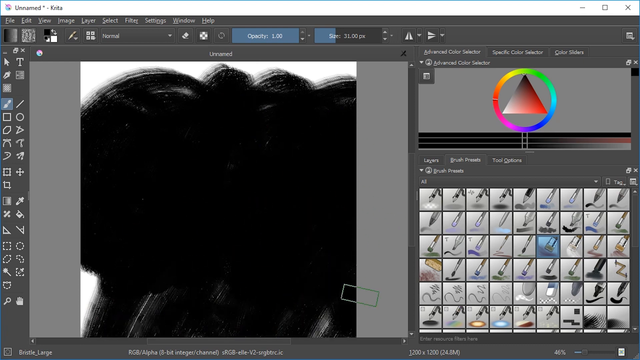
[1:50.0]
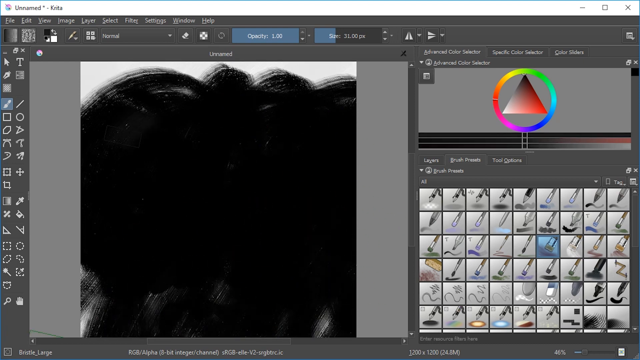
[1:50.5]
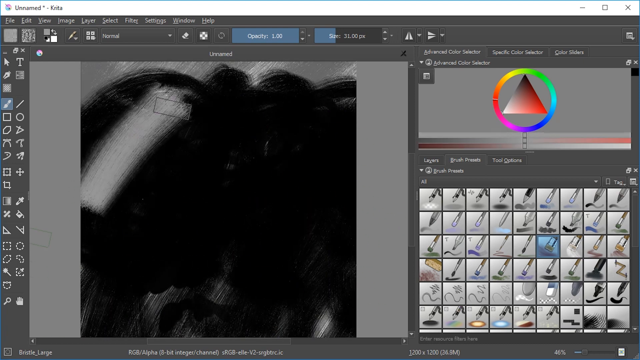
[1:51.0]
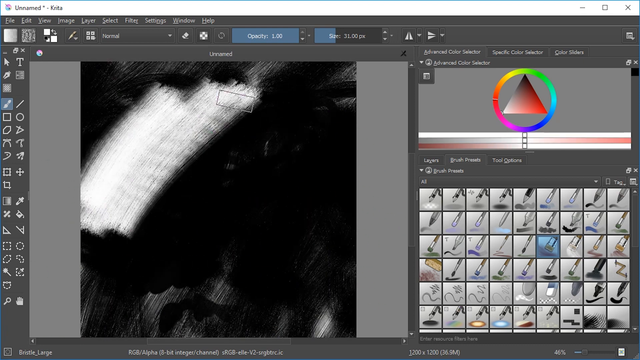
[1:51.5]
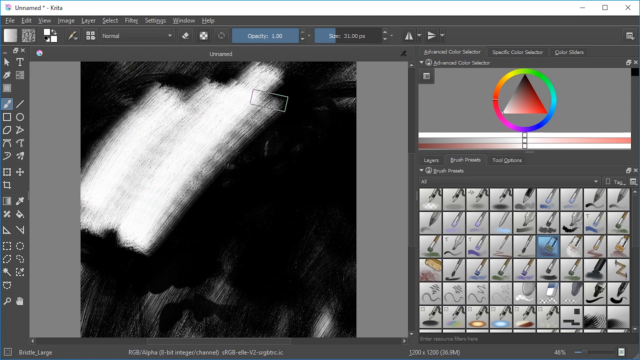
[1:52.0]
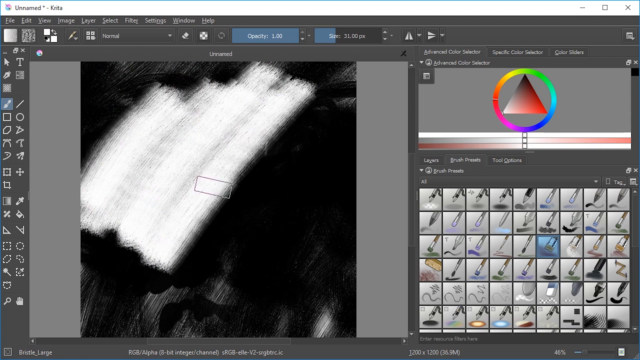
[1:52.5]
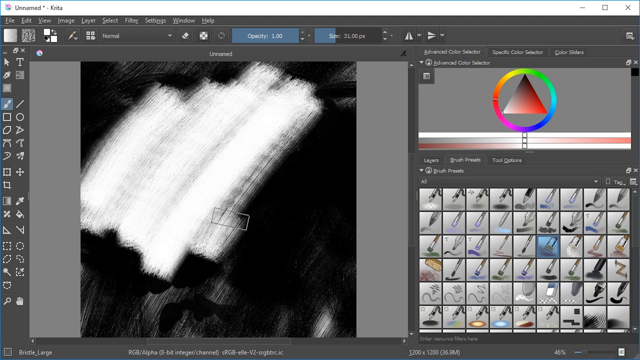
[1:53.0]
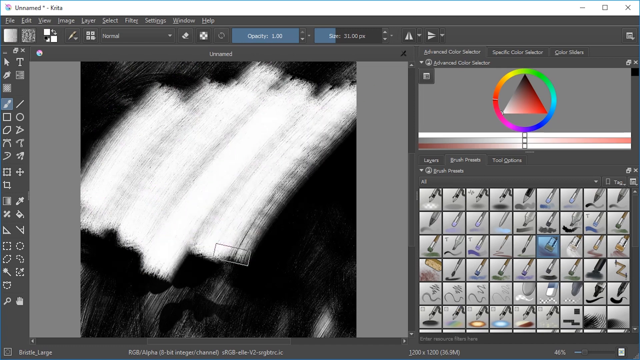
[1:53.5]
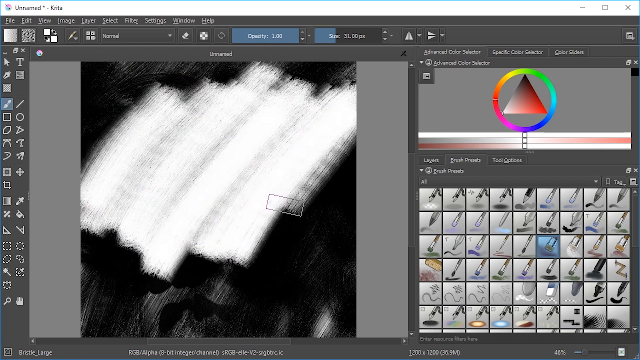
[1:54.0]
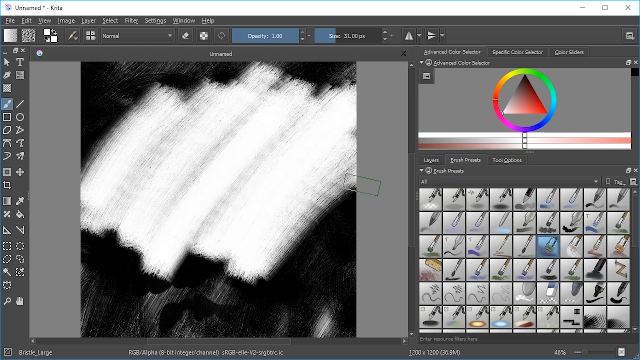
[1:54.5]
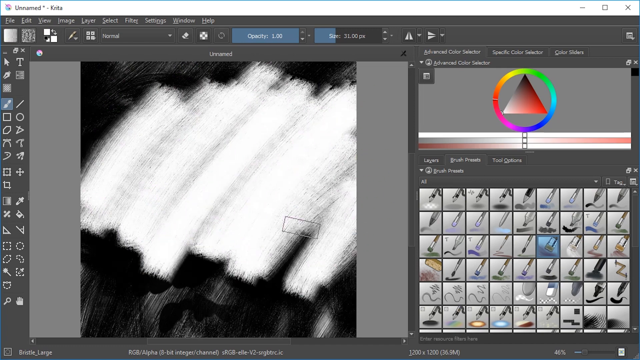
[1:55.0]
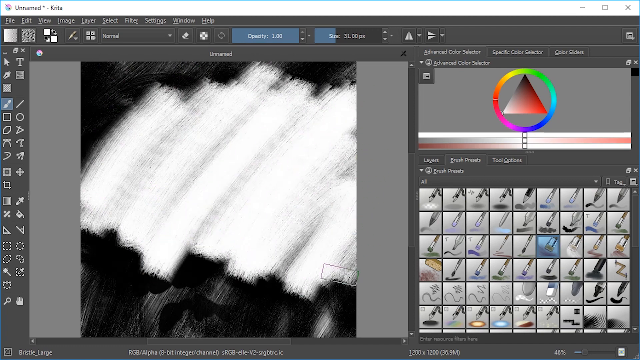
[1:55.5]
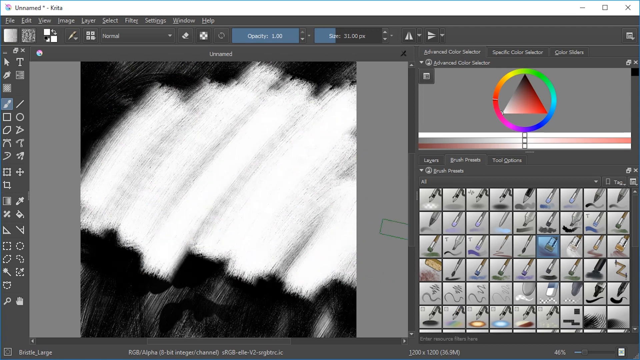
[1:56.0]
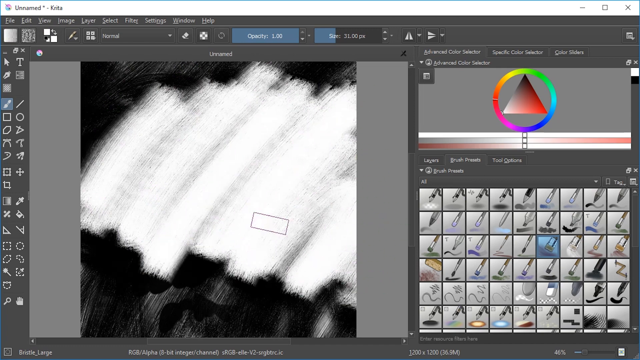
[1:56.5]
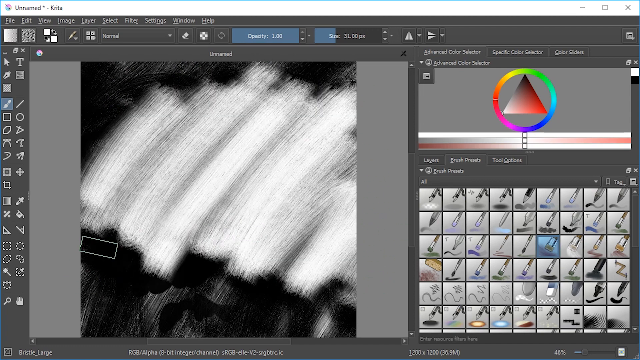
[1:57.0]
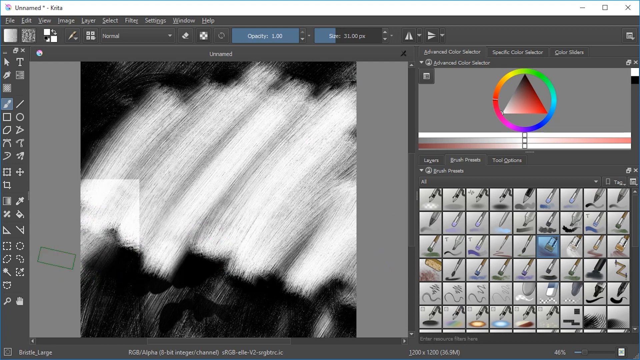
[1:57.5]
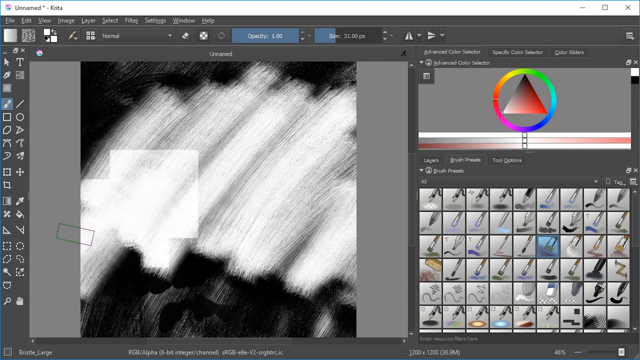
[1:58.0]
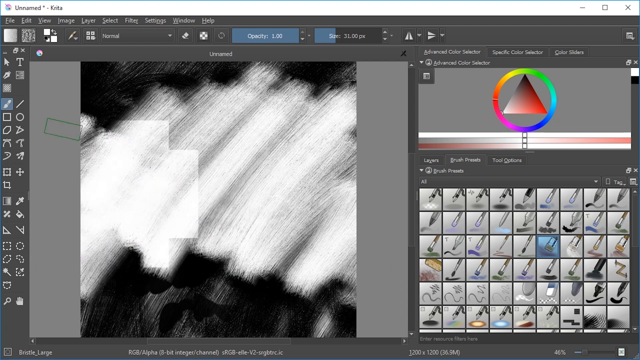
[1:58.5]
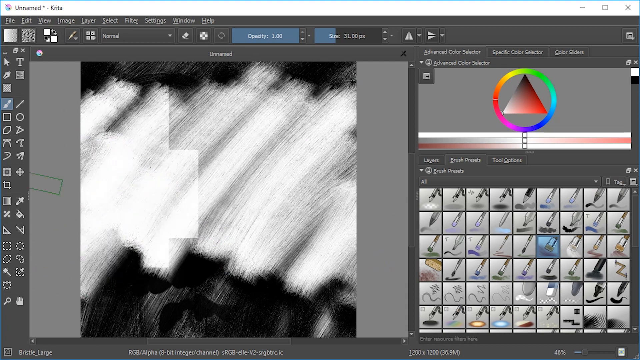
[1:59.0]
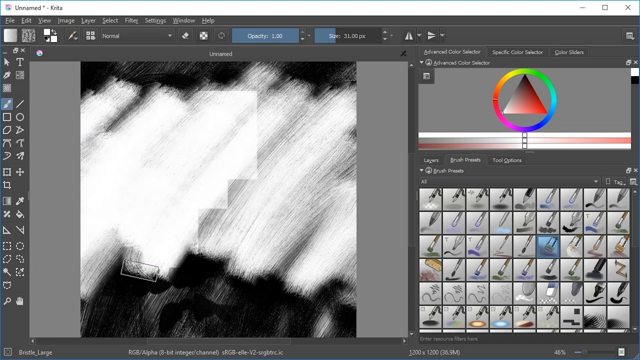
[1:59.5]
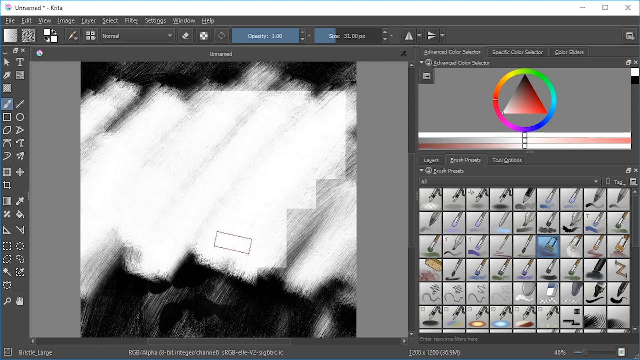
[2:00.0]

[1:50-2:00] In the right-hand pane, directly below the color triangle and above the paint choices, a color indicator starts off very dark: the top line is all black, and the second and third lines are faded. It then changes without the mouse appearing to do anything, probably by a keystroke. The three color lines become: the top line all white, the second with very light gray edges, and the third with dark gray on its left-hand edge. Using the same brush and stylus as before, a white charcoal overlay is applied, covering the black with a white dotted covering and smearing back and forth as the video ends.